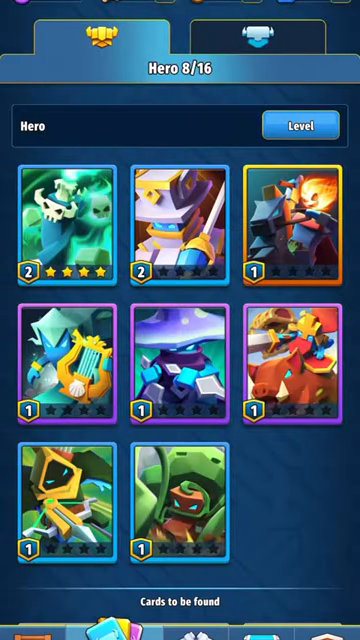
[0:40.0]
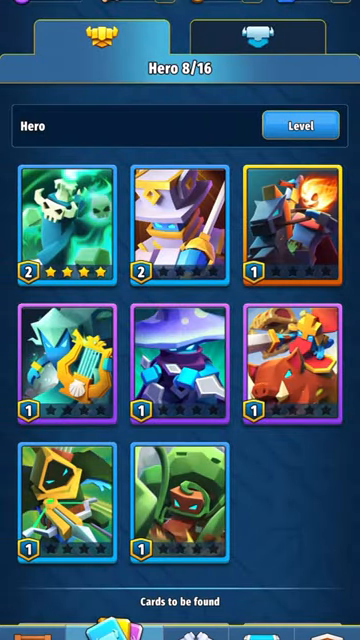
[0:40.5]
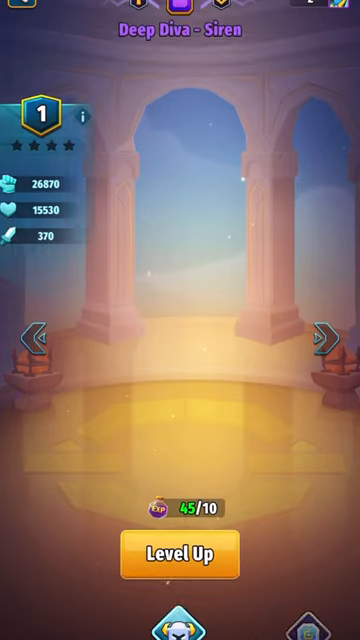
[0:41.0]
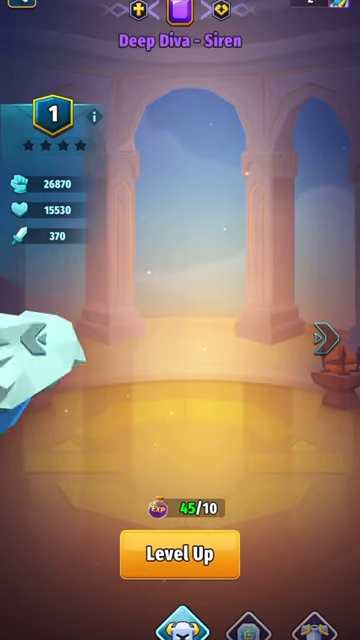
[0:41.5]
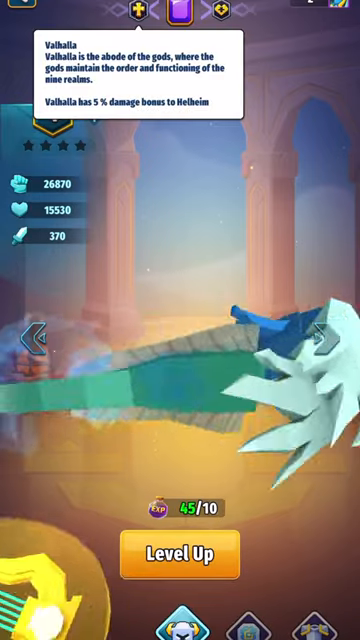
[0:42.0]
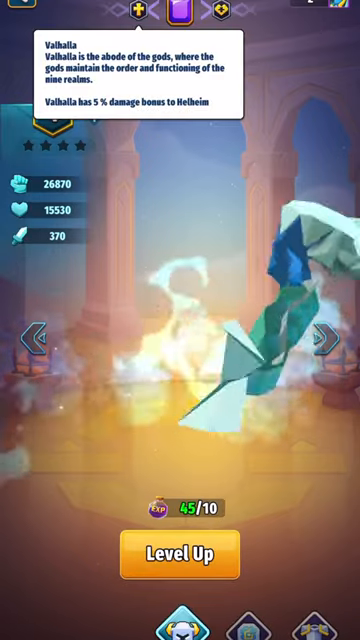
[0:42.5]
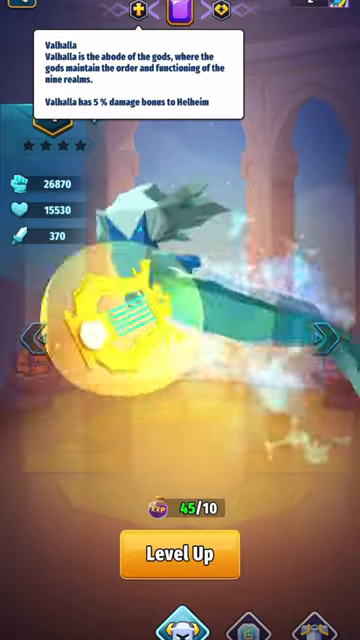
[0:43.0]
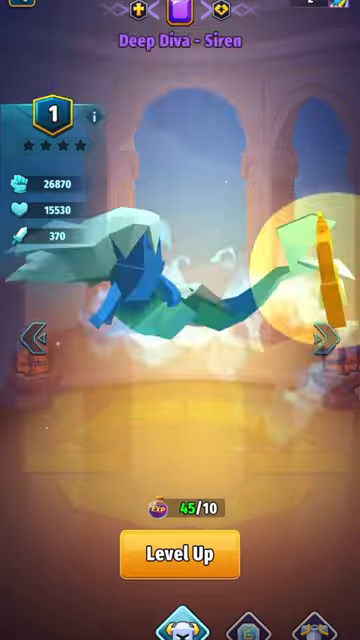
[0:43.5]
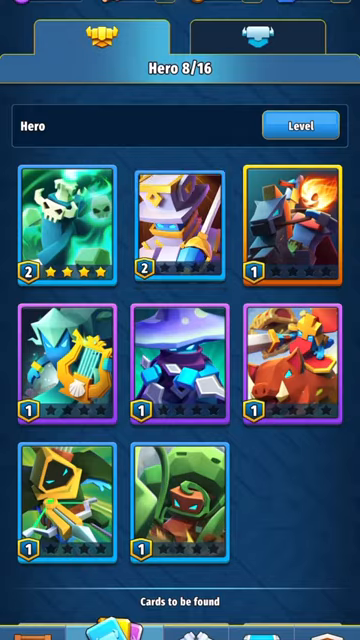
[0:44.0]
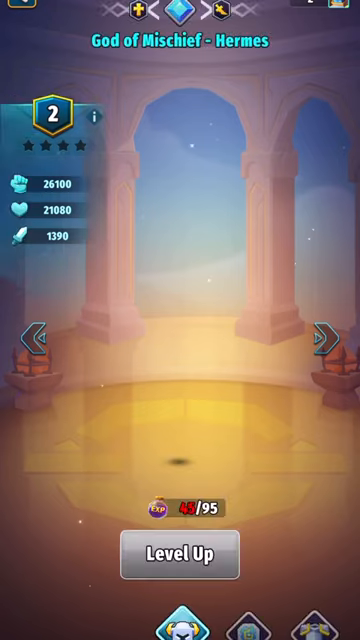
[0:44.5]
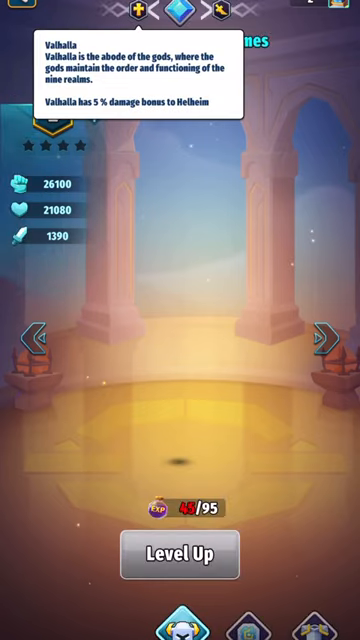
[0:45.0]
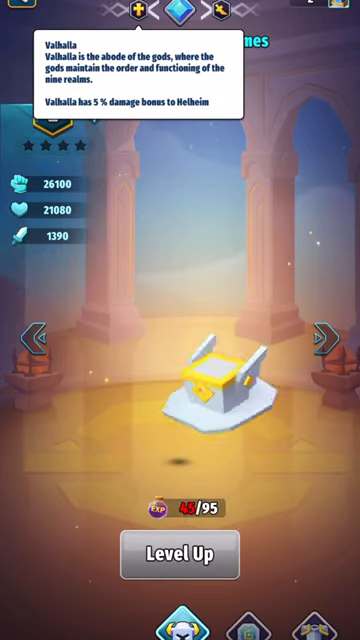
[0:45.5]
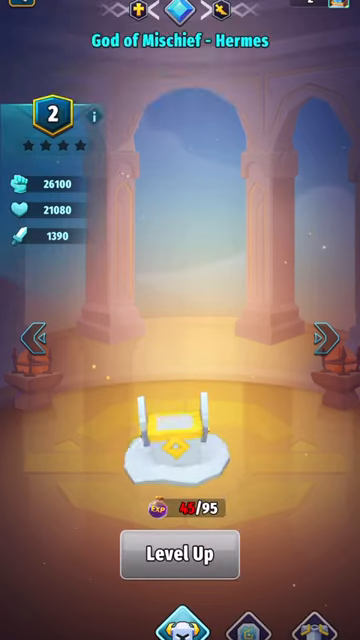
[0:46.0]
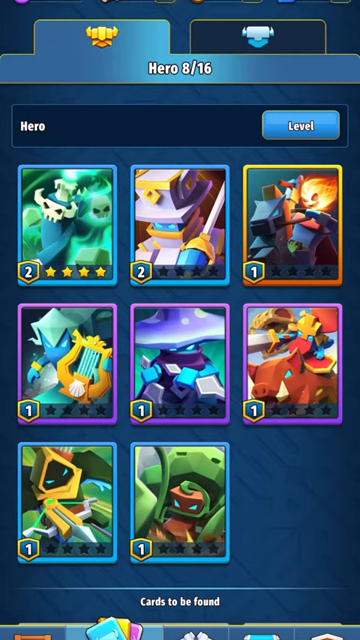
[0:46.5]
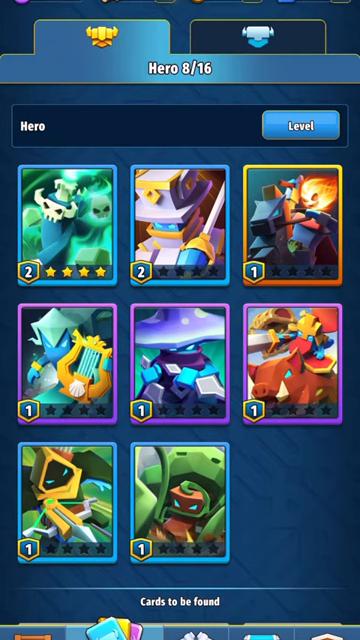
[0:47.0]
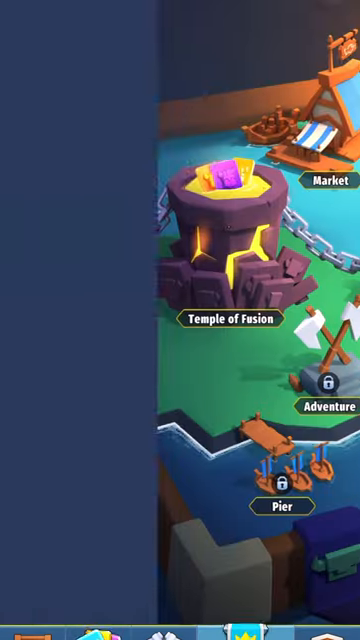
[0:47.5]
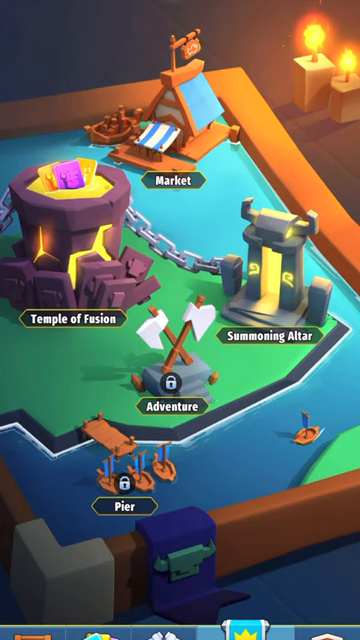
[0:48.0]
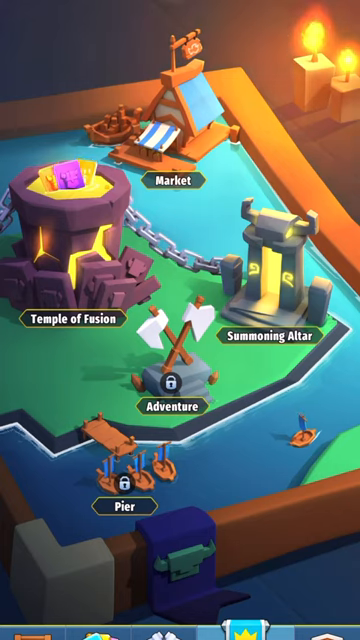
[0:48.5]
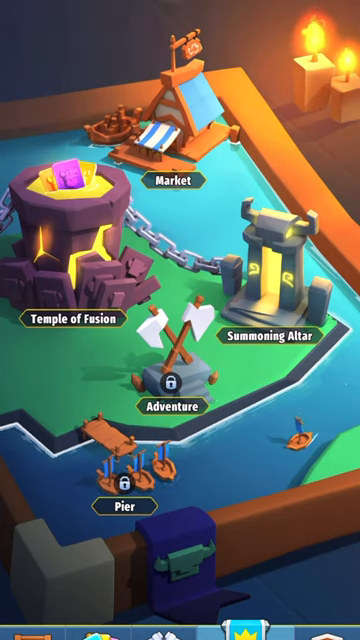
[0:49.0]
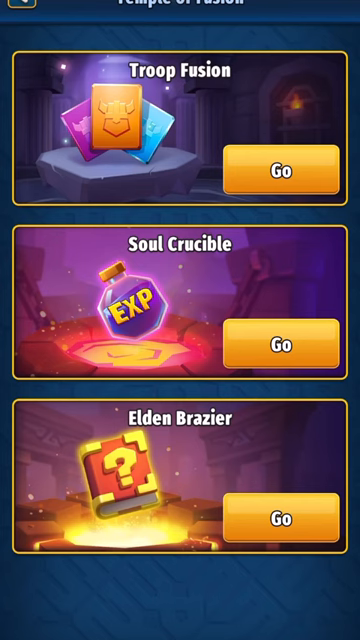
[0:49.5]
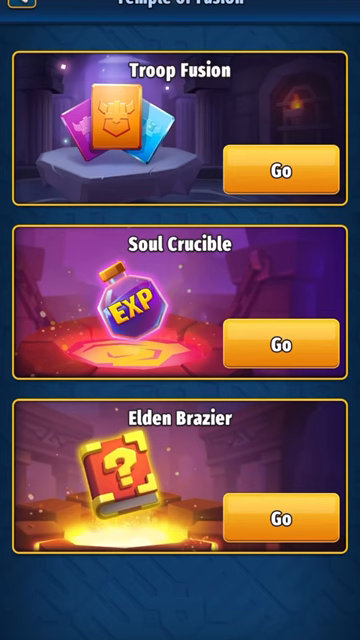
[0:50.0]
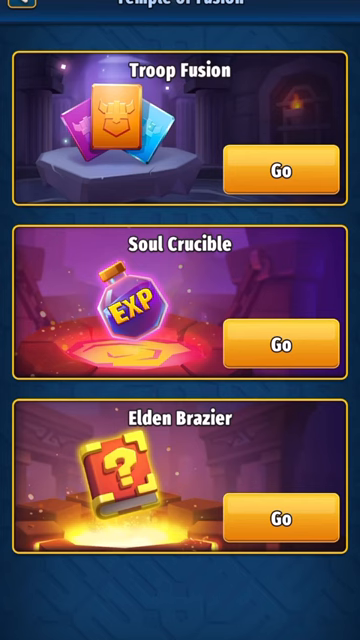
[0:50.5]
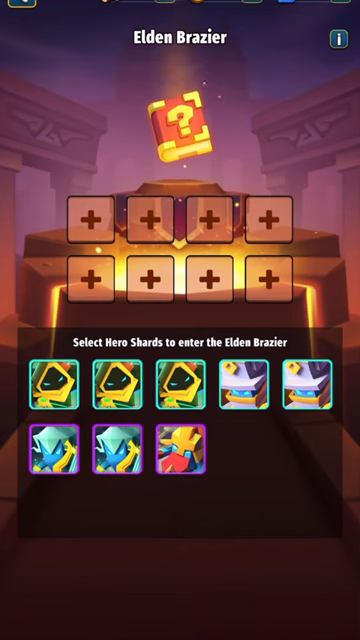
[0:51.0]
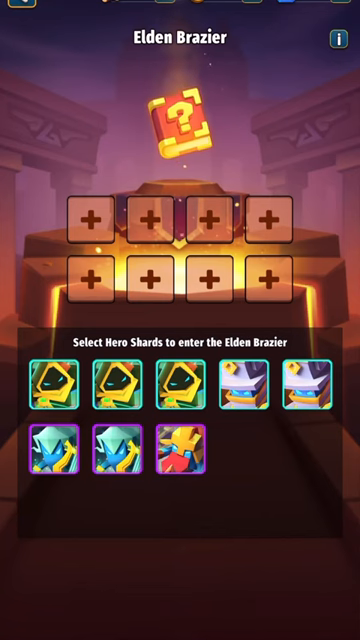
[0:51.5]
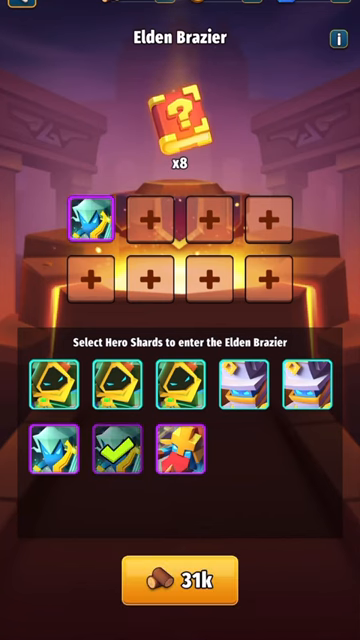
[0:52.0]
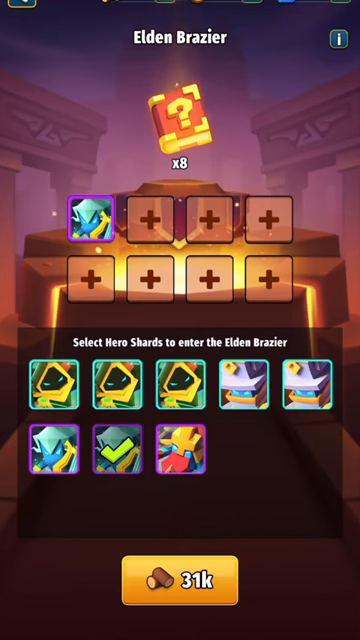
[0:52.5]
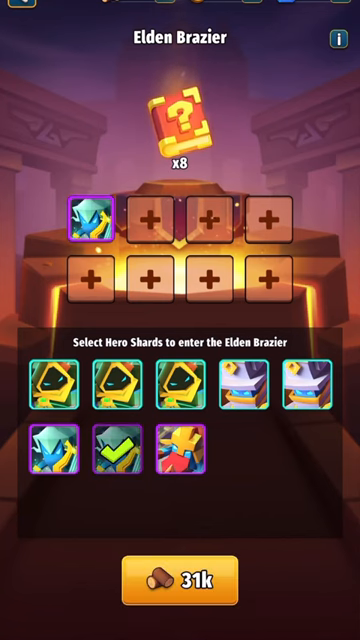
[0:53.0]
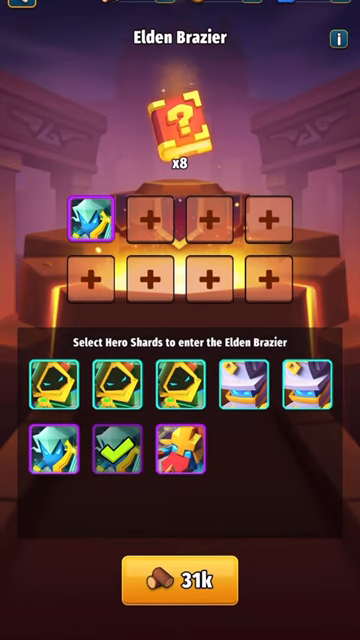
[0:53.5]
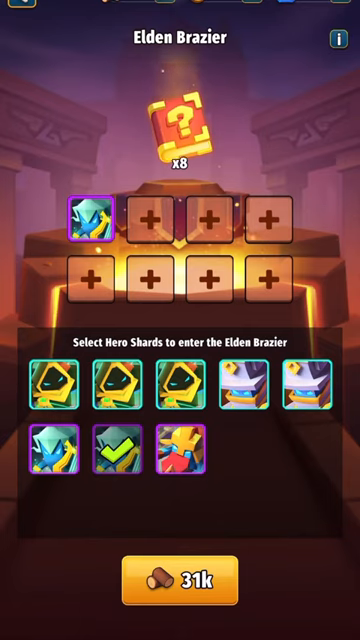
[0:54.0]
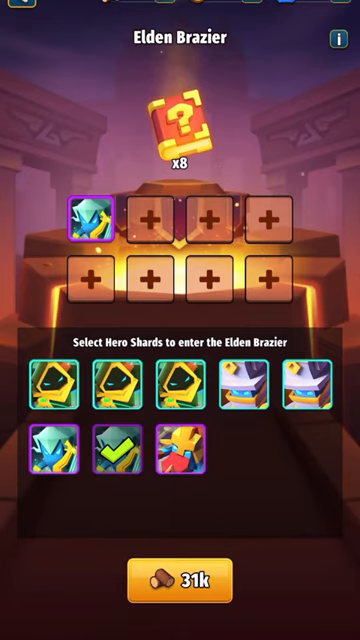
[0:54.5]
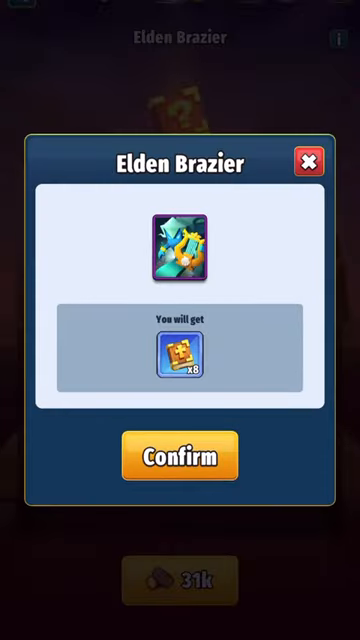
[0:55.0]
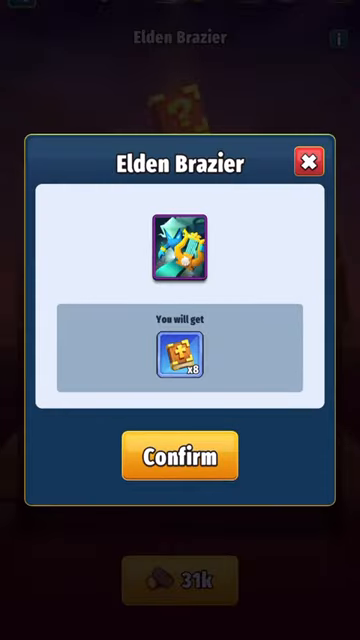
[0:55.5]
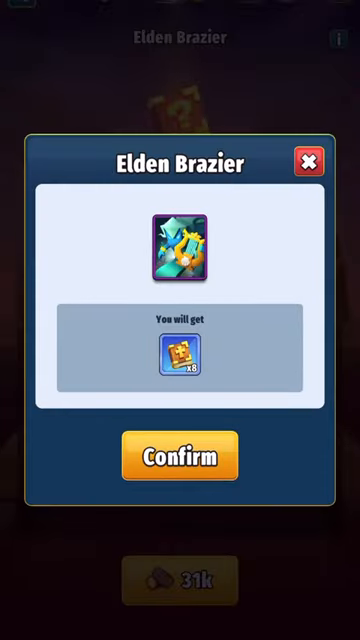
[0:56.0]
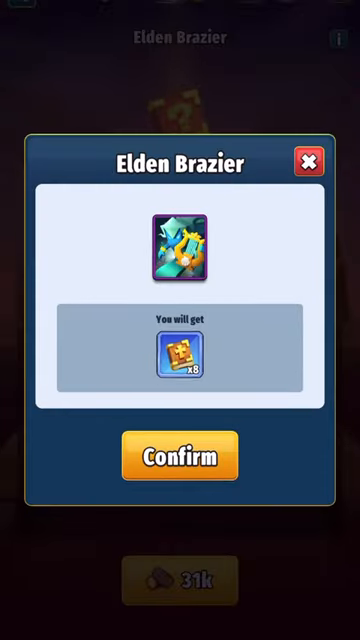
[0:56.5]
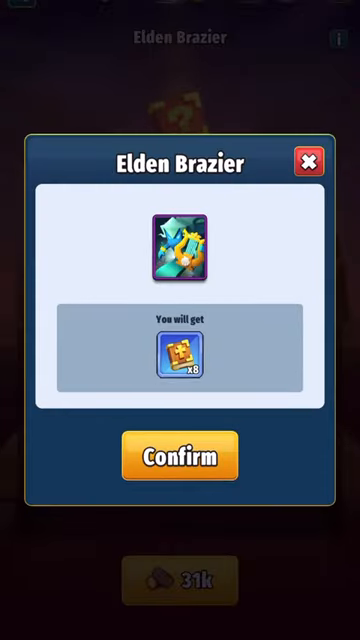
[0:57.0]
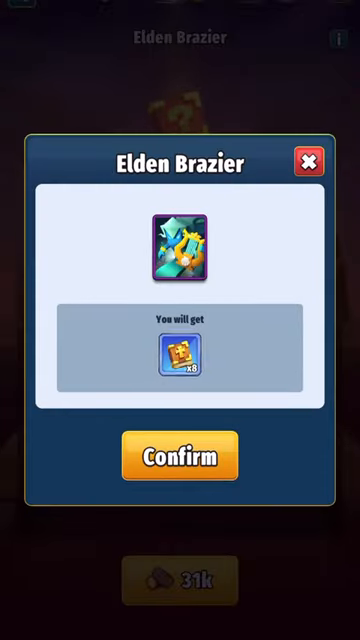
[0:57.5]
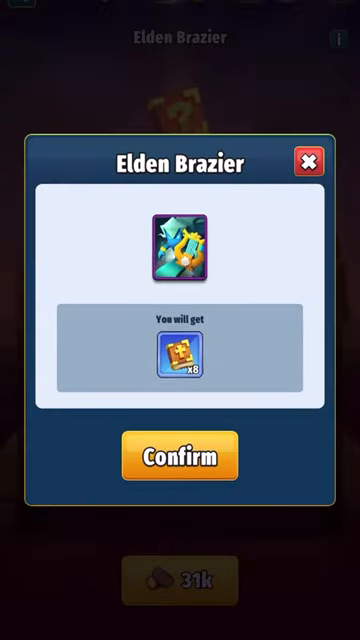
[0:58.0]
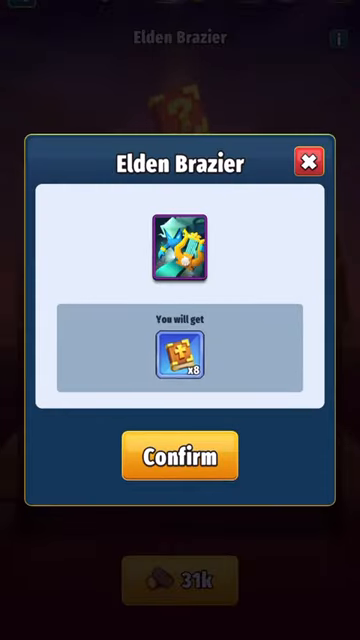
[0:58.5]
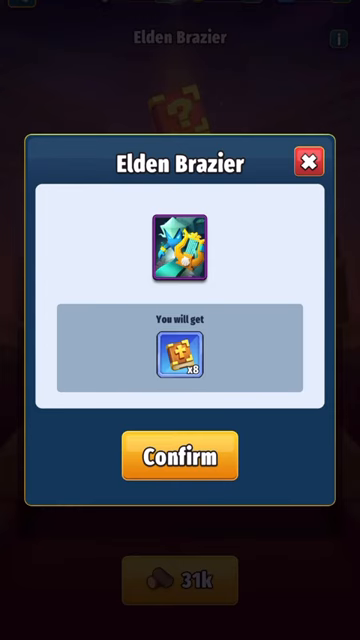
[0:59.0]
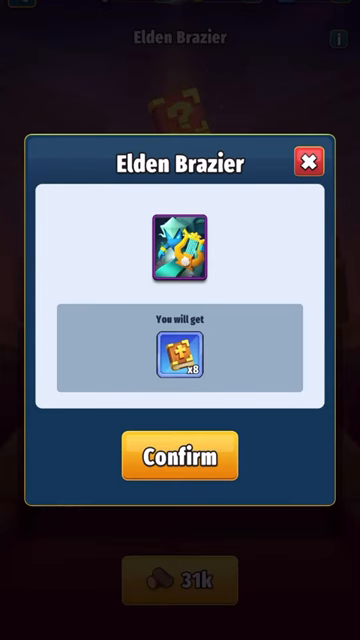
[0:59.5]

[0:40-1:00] The page with the different cards and characters is displayed again. Another character appears, seemingly with a long mermaid-like tail. Another character is then opened, which seems to be the previous one but shows just its hat. The user seems to be going through the settings and then returns to the icon game. Behind the icon game is a large flaming center that seems to have the book on top of it, with large column-like structures in the background. The user seems to be trying to guess the different icons to enter the Elden Brazier. A button appears to have been pressed that shows the reward for completing this task: eight books that seem to have a cross on top. The user presses the book icon aggressively before going back and trying to use another character.